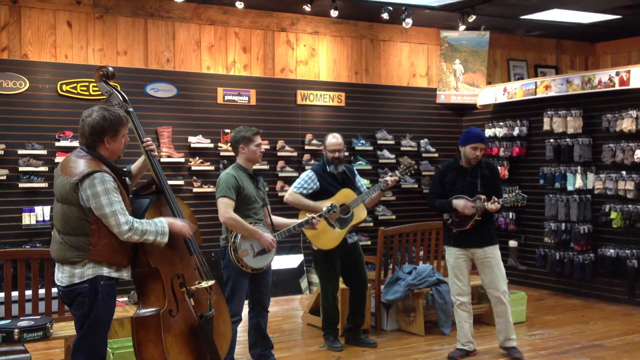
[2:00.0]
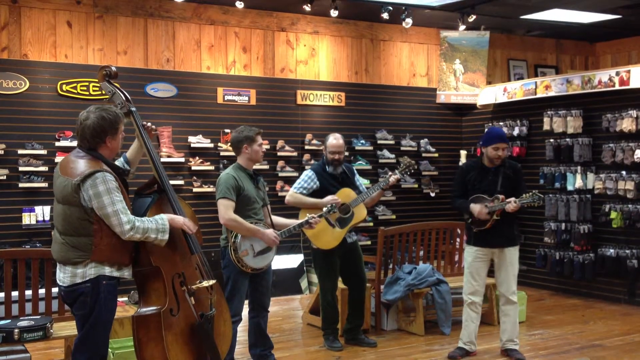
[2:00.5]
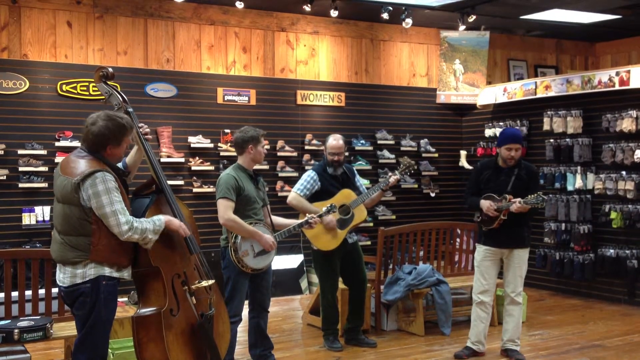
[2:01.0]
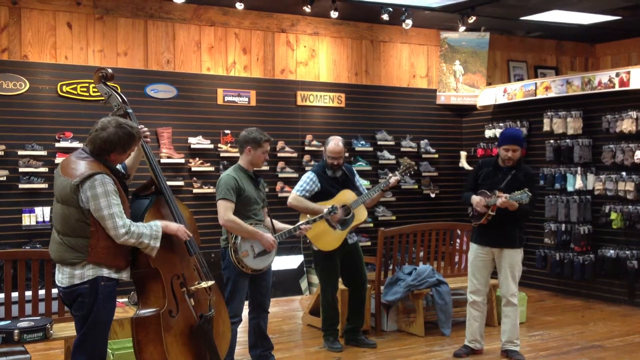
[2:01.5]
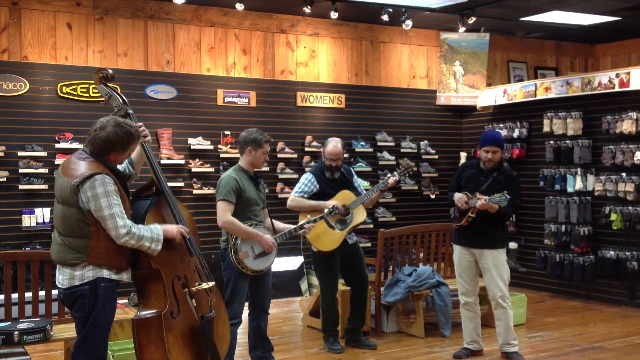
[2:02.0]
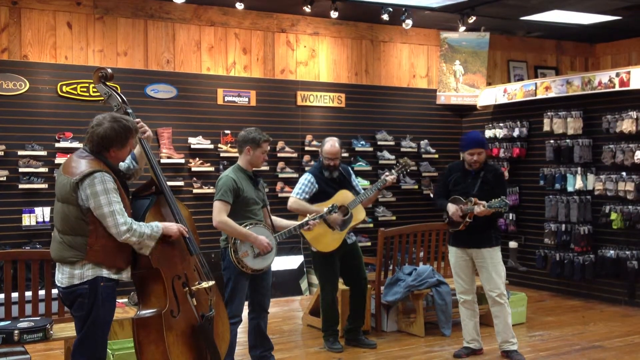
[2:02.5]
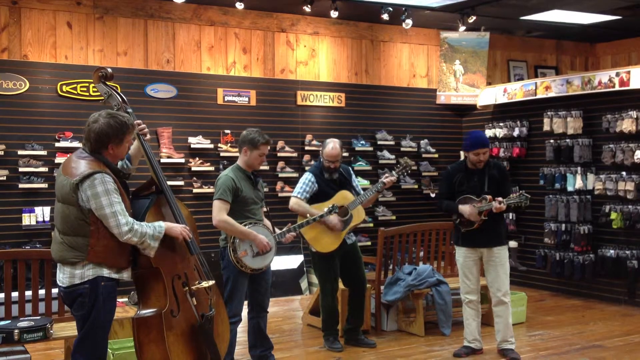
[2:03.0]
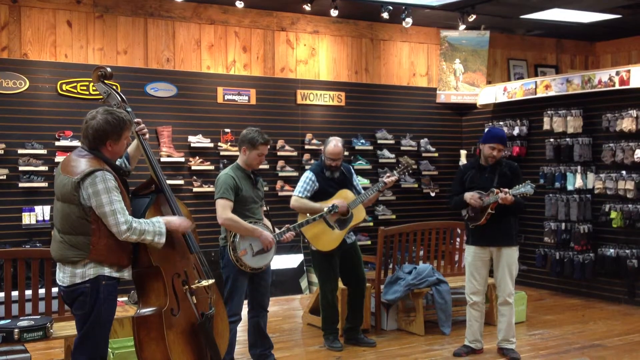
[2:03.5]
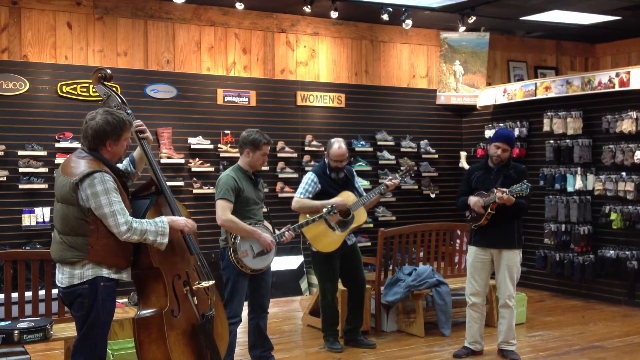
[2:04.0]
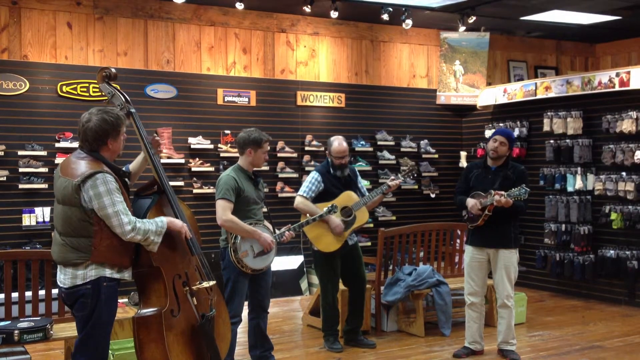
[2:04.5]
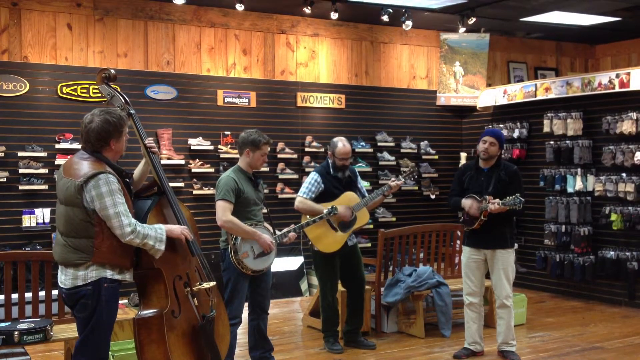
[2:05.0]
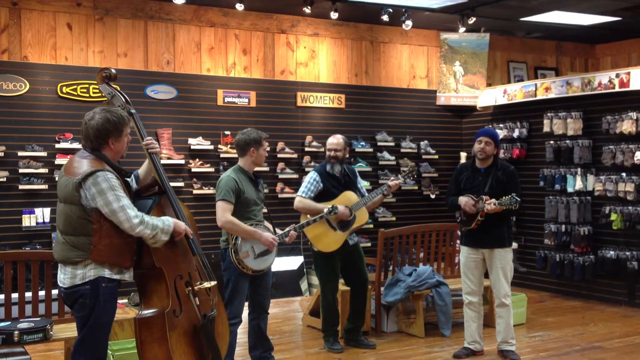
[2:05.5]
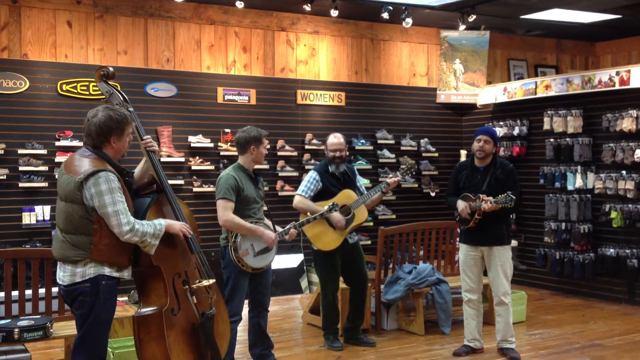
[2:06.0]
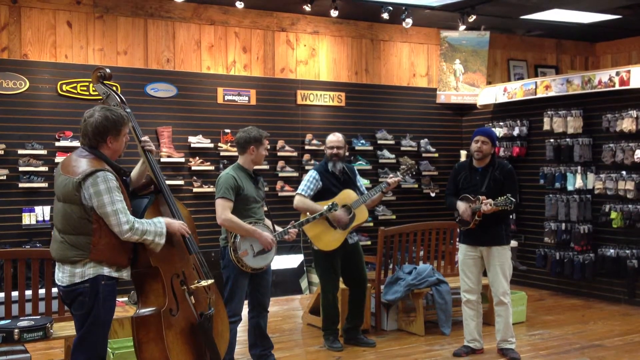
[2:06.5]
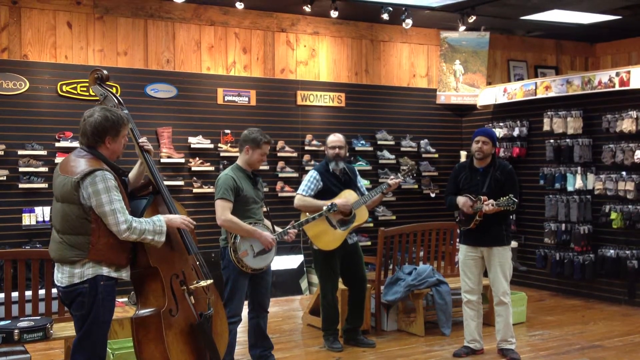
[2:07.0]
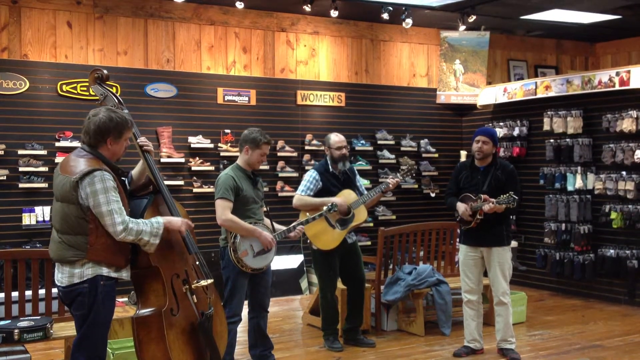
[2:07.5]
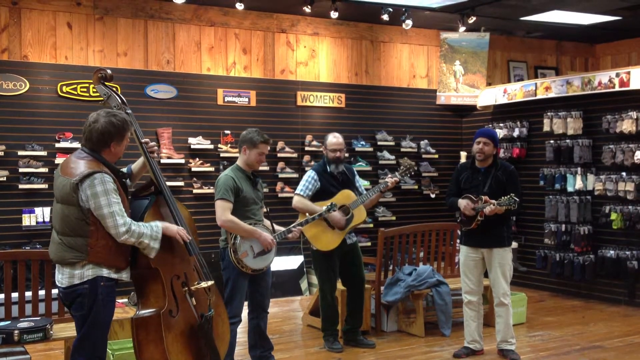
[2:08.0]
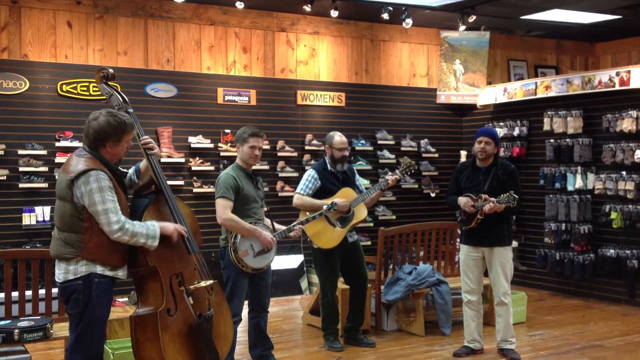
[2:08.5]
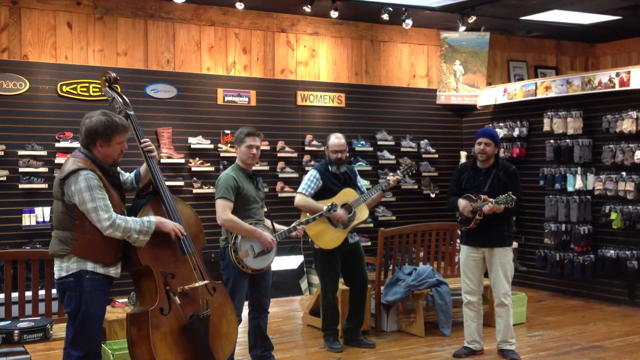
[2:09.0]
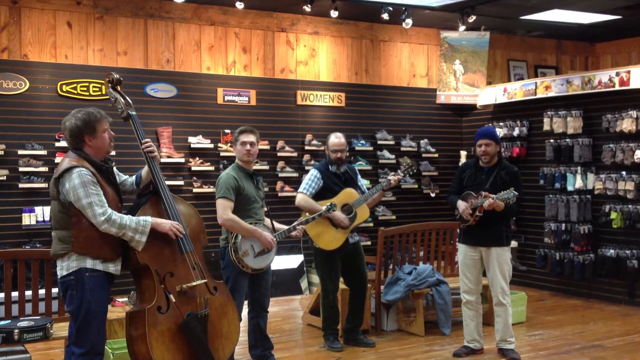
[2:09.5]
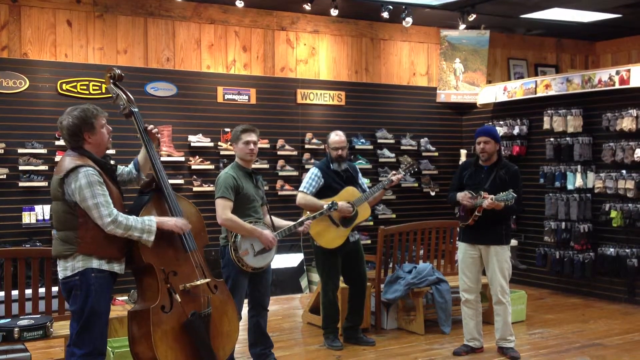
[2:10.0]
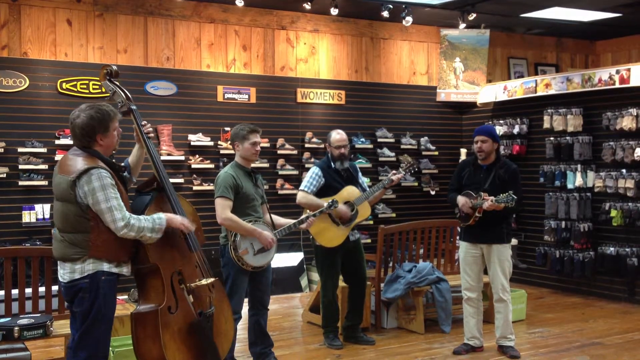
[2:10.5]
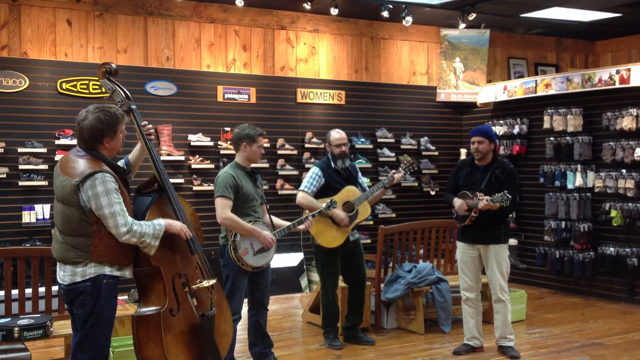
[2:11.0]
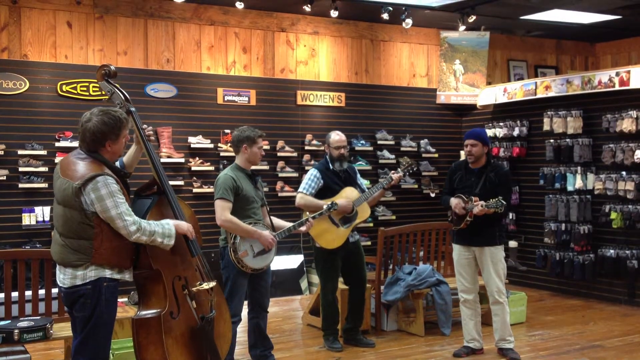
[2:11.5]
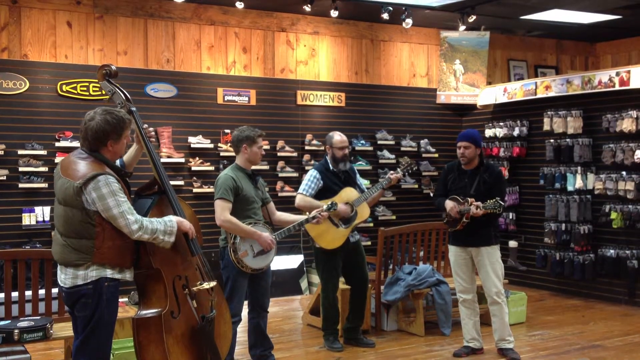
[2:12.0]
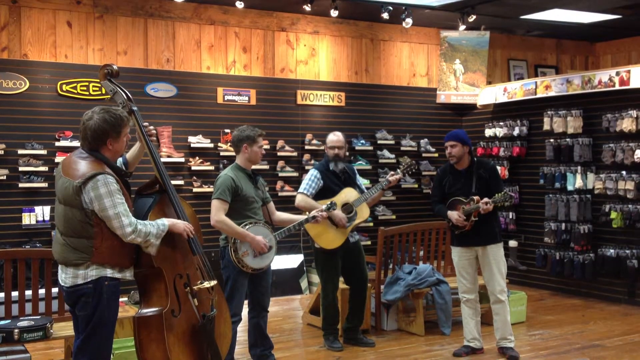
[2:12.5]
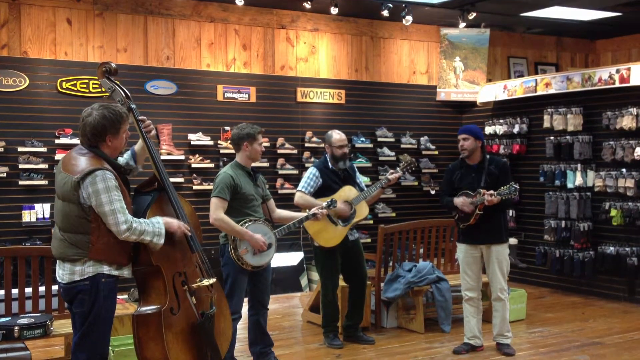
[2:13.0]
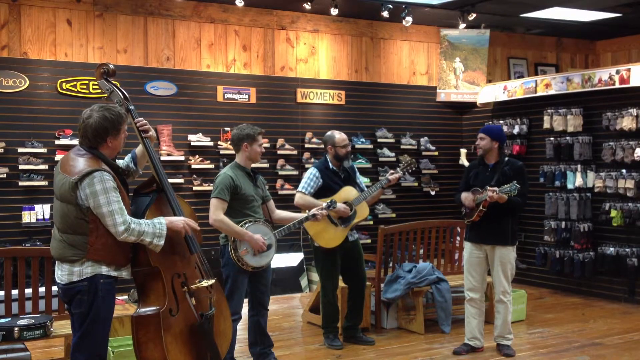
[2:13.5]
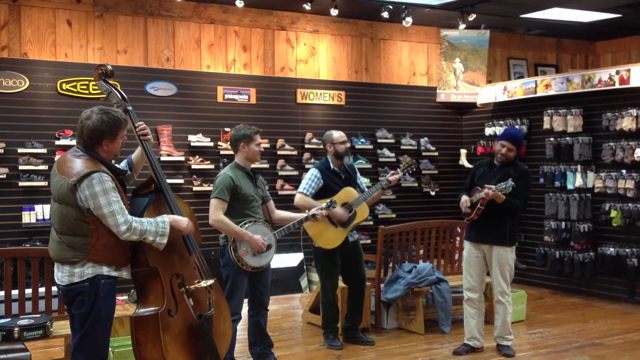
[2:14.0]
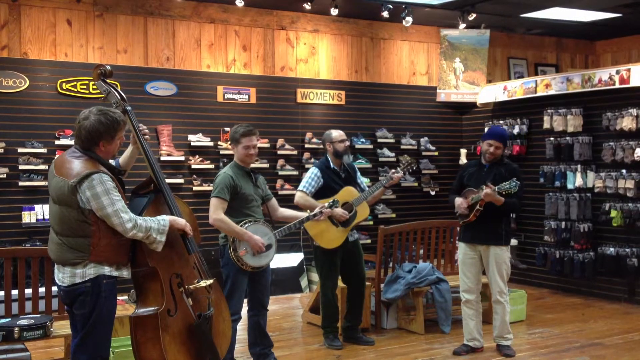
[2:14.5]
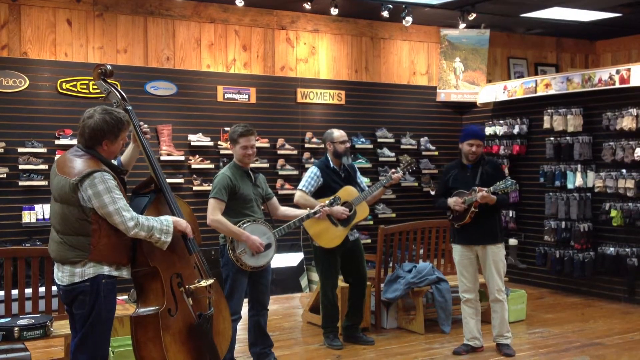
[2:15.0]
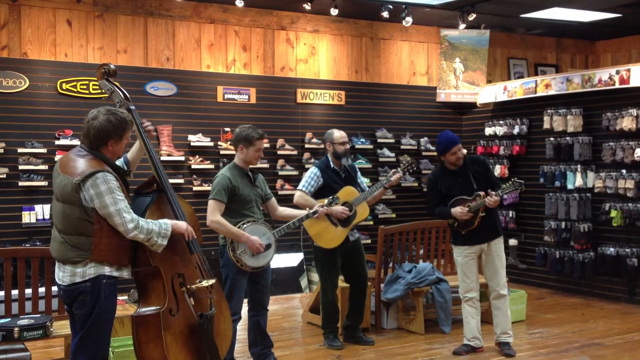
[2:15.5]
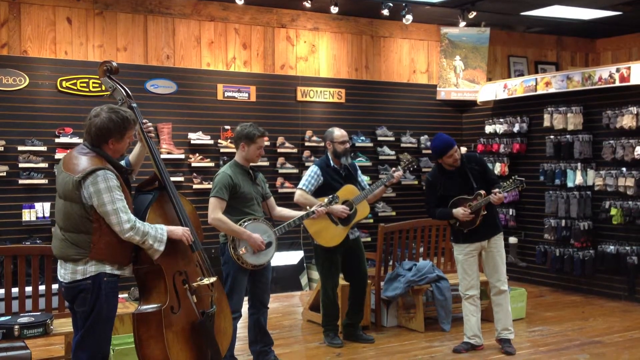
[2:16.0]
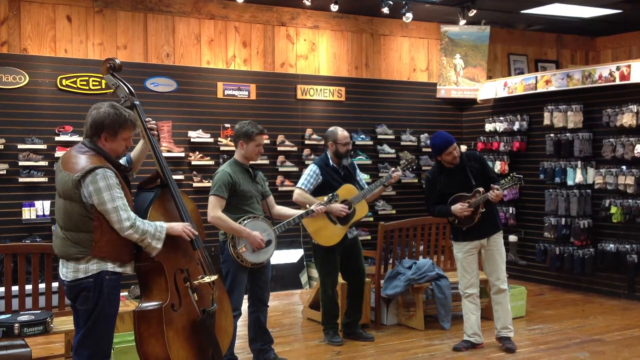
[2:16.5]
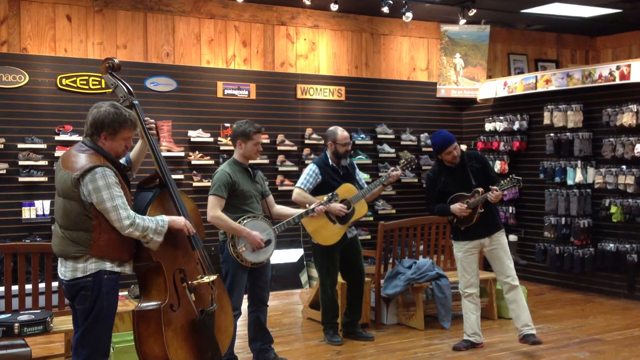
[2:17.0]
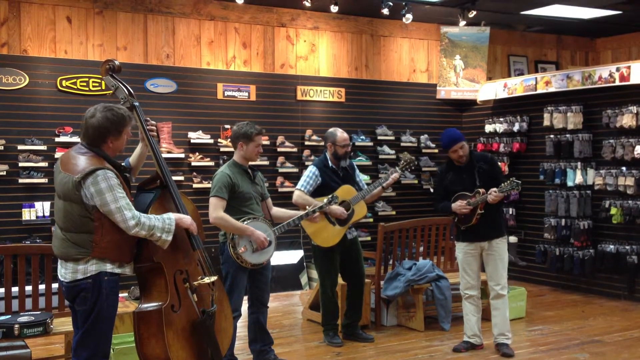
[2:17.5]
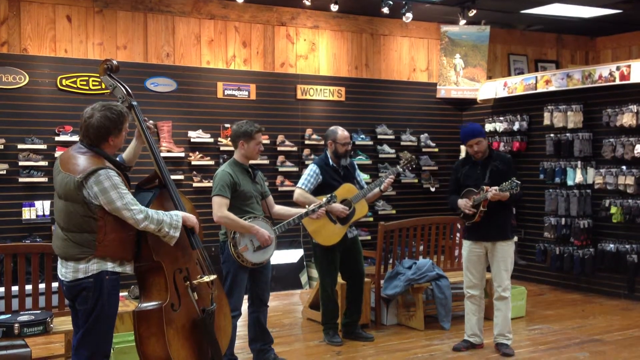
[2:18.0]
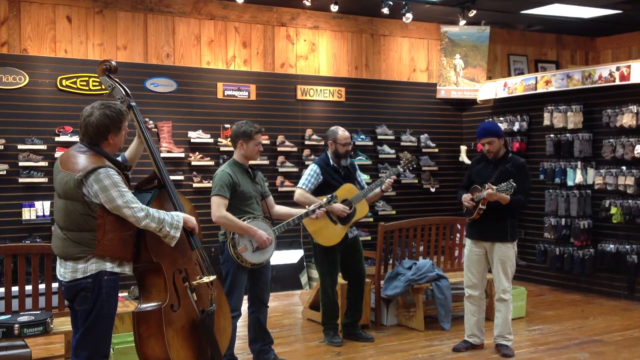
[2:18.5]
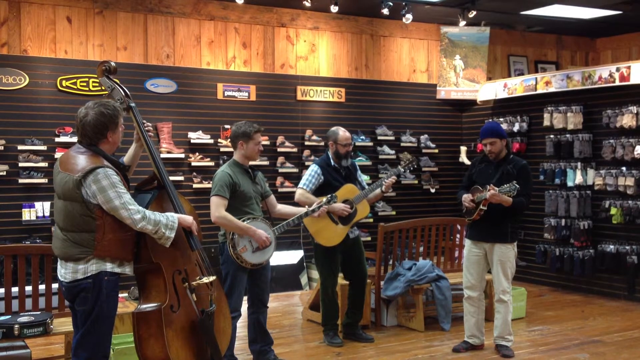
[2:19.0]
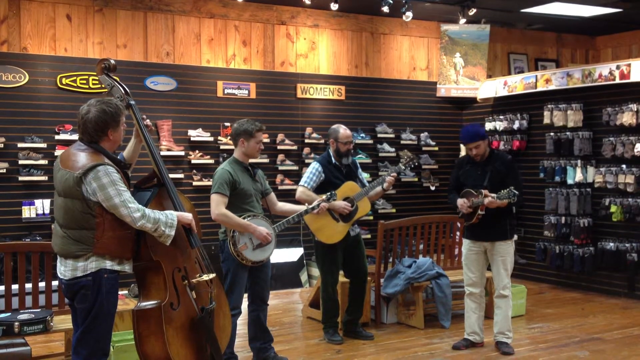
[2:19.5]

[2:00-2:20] Everyone except the banjo player plays quite a bit faster; the song has apparently picked up pace, maybe coming toward its end, and it is apparently still the same song. The man with the acoustic guitar strums hard and very fast, his head moving a lot. The man with the small guitar plays very fast too and sings a little, apparently not the whole time. The banjo player bobs his head quite a bit this time, not just small movements. The cello player plays a little faster and more aggressively than before.